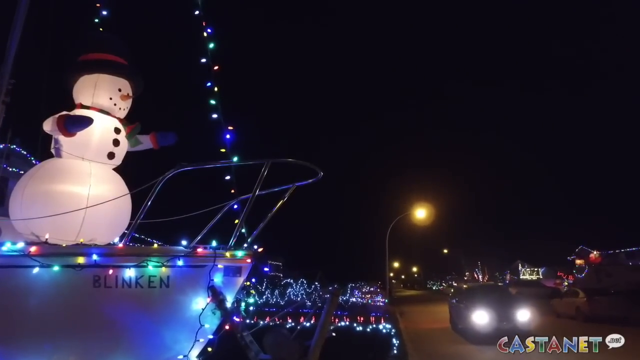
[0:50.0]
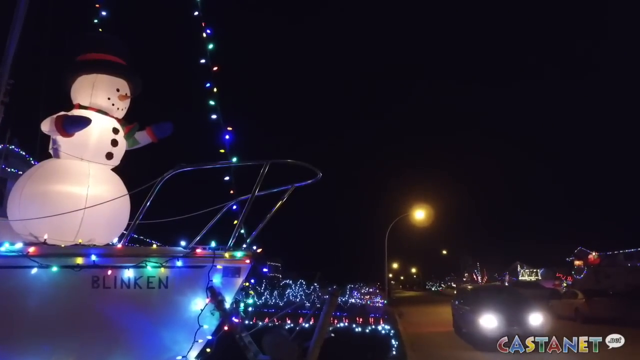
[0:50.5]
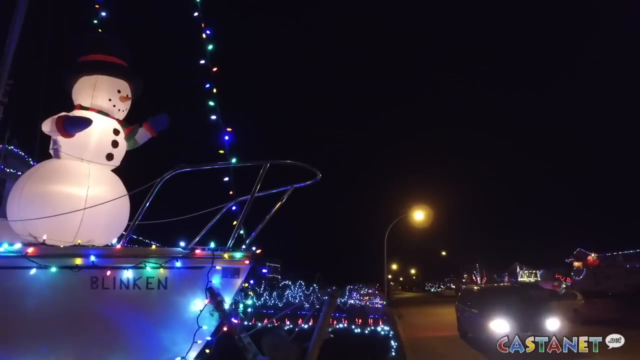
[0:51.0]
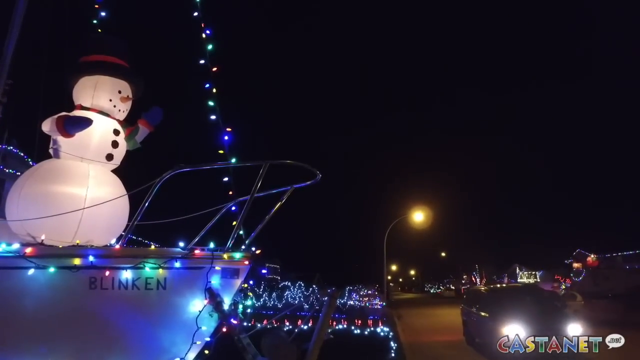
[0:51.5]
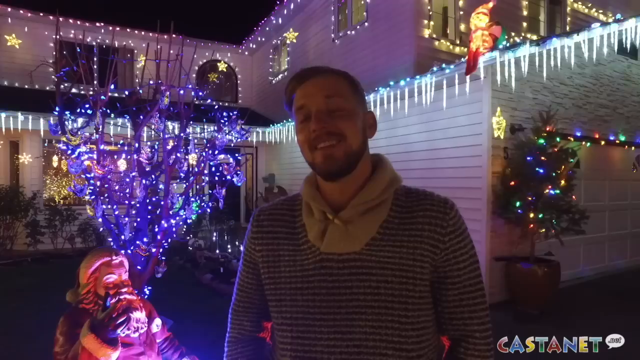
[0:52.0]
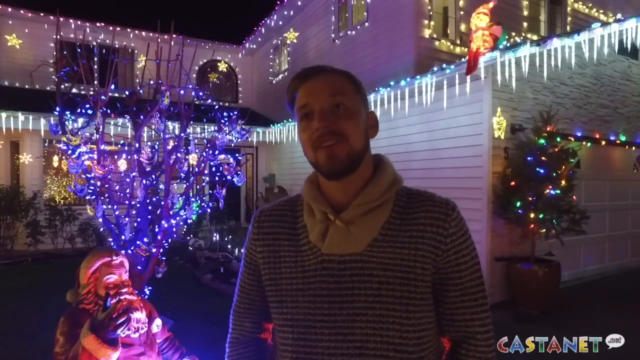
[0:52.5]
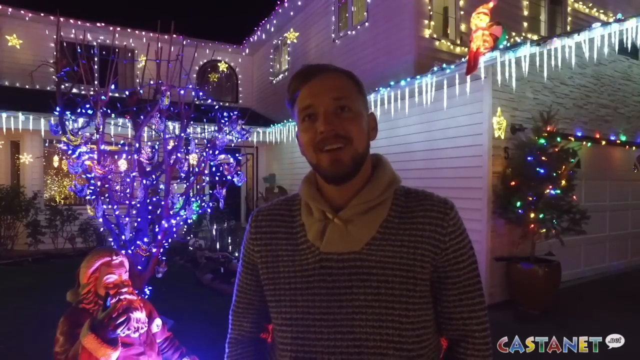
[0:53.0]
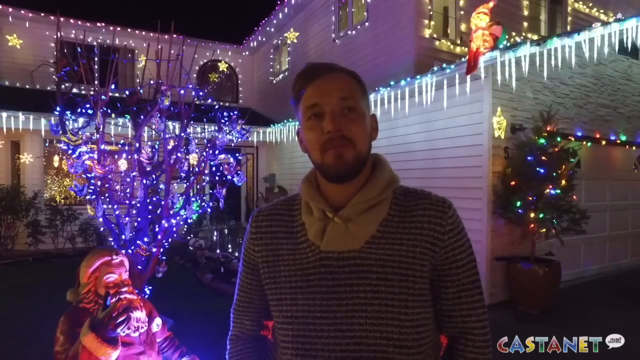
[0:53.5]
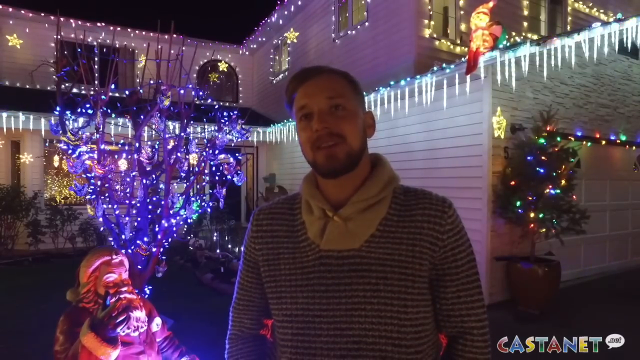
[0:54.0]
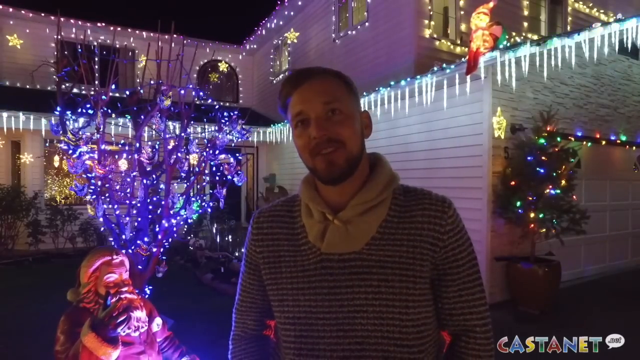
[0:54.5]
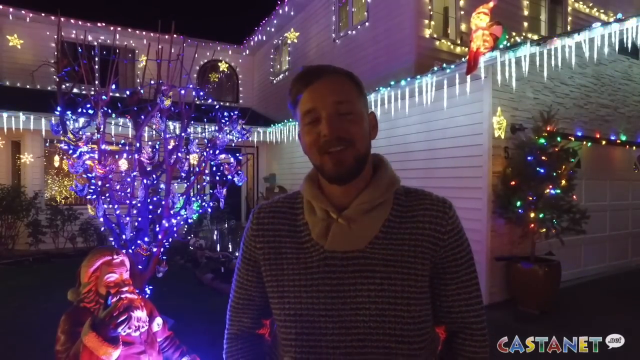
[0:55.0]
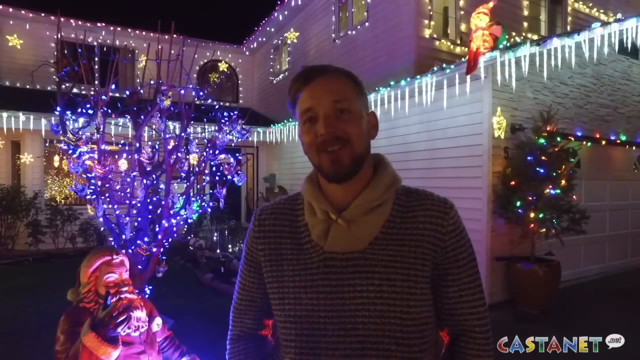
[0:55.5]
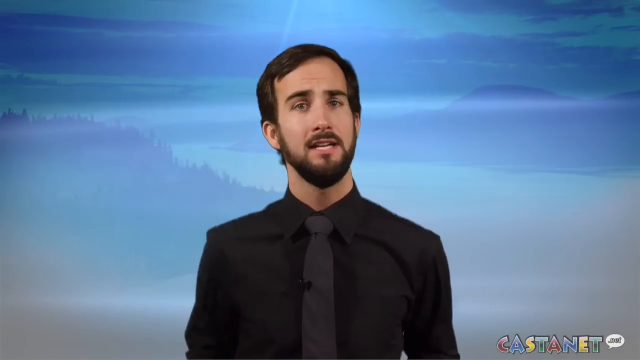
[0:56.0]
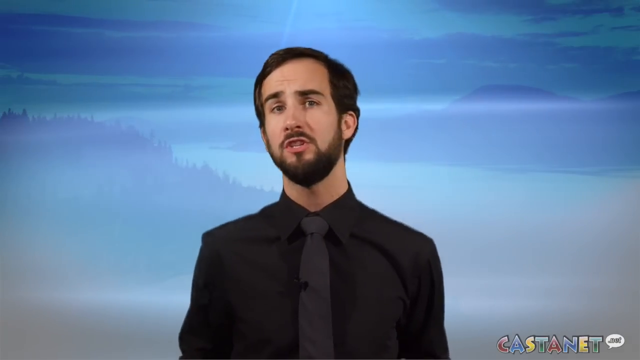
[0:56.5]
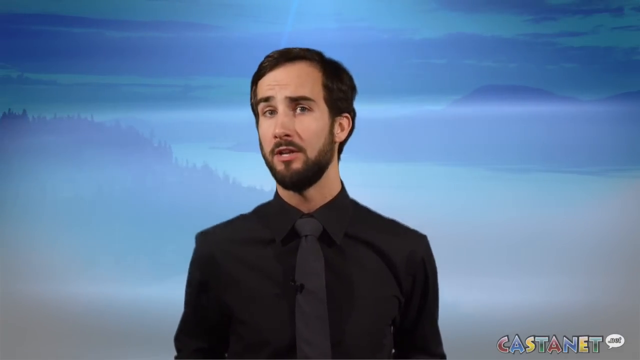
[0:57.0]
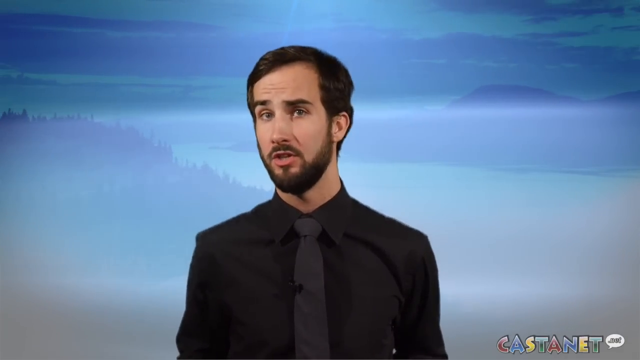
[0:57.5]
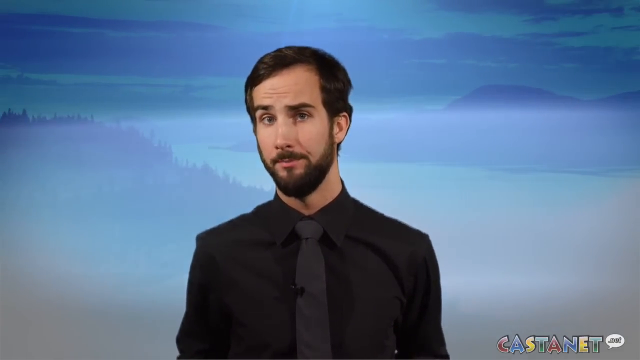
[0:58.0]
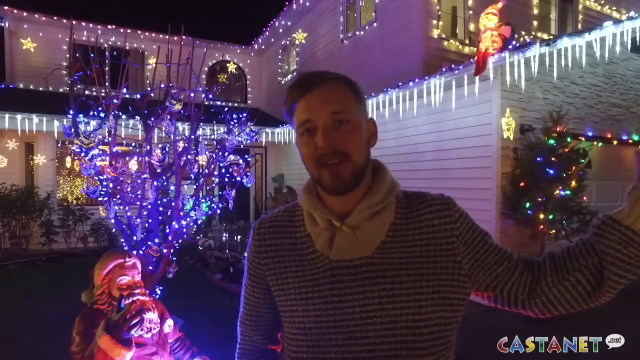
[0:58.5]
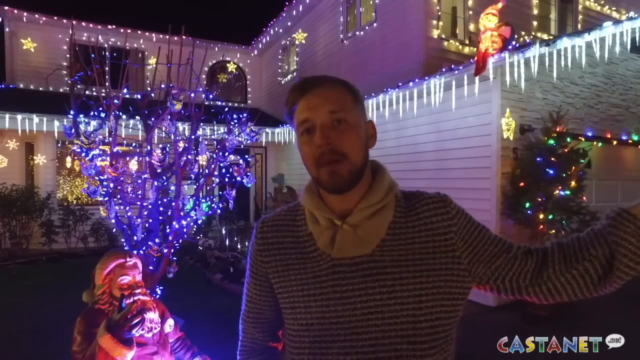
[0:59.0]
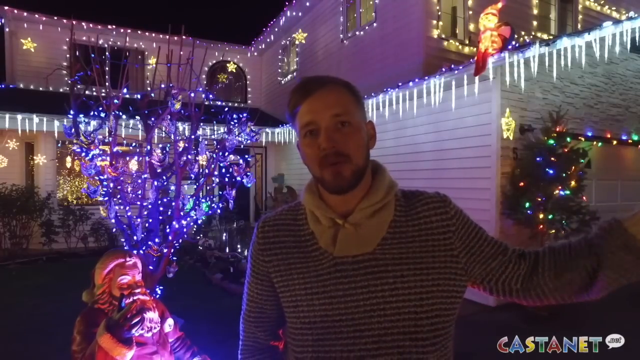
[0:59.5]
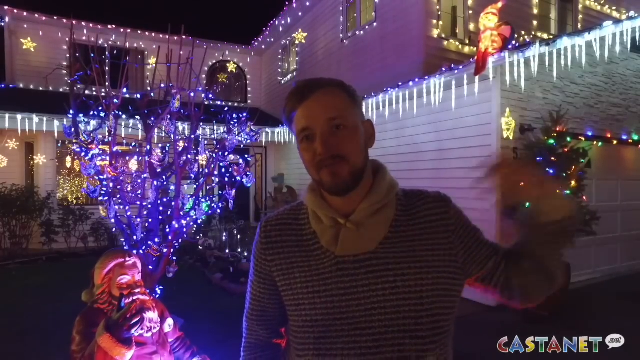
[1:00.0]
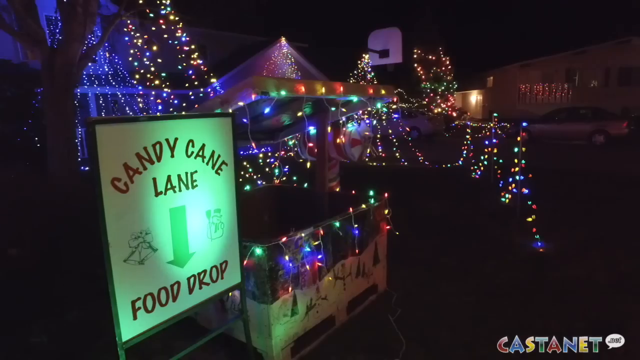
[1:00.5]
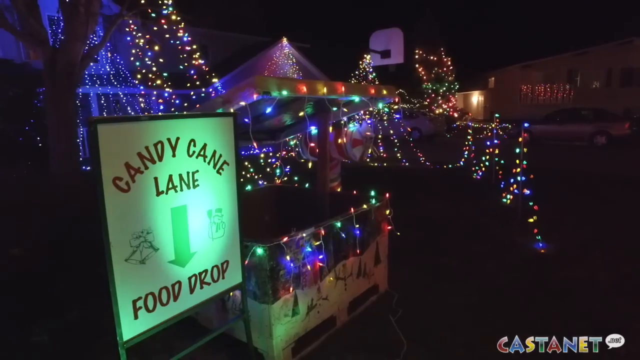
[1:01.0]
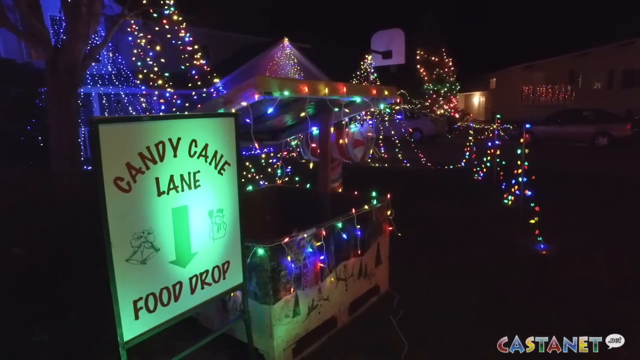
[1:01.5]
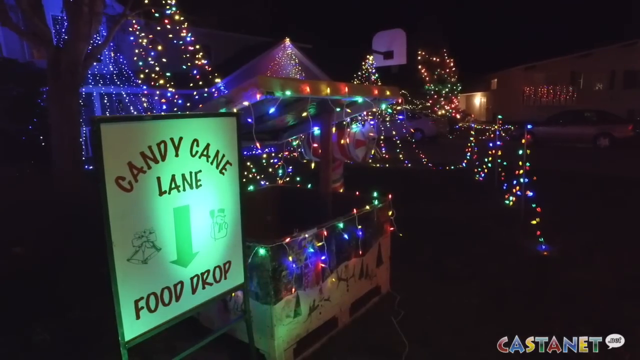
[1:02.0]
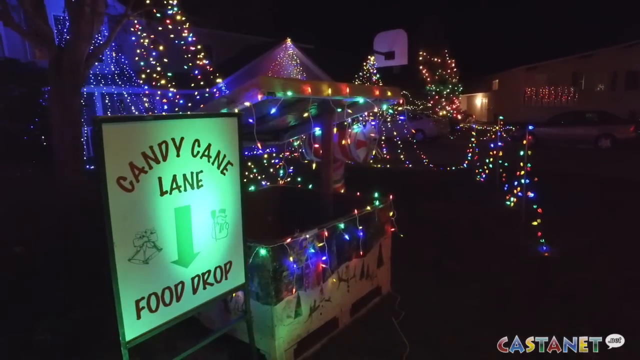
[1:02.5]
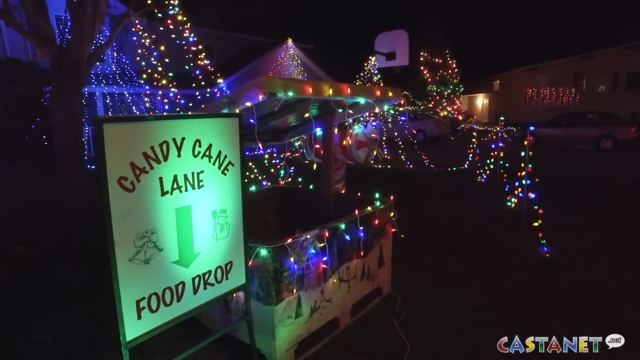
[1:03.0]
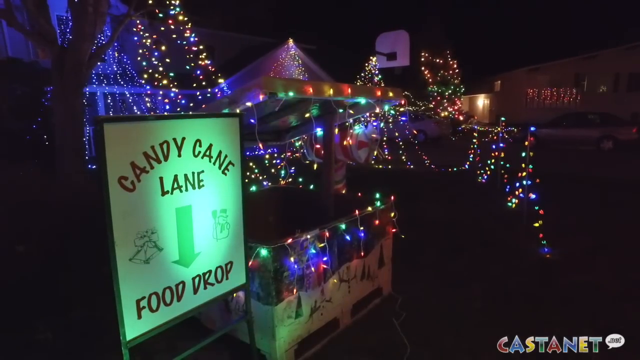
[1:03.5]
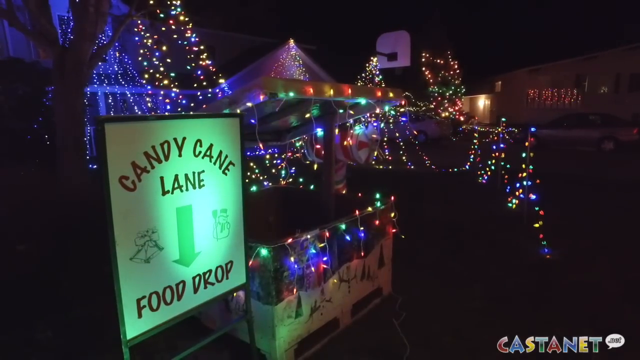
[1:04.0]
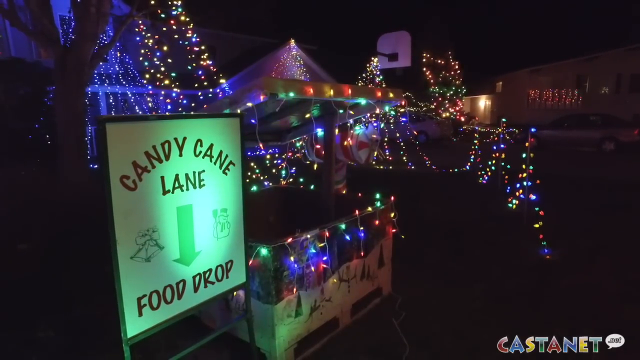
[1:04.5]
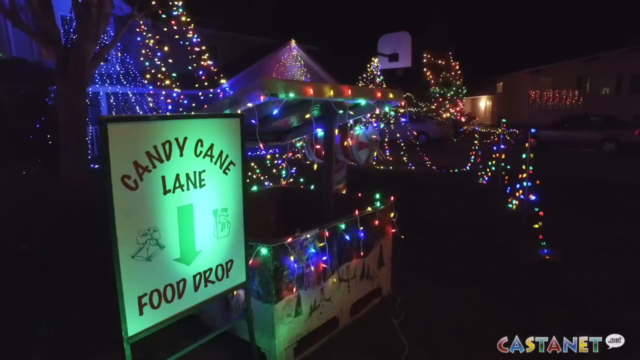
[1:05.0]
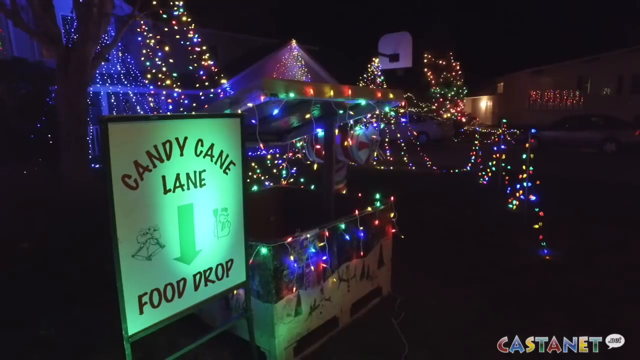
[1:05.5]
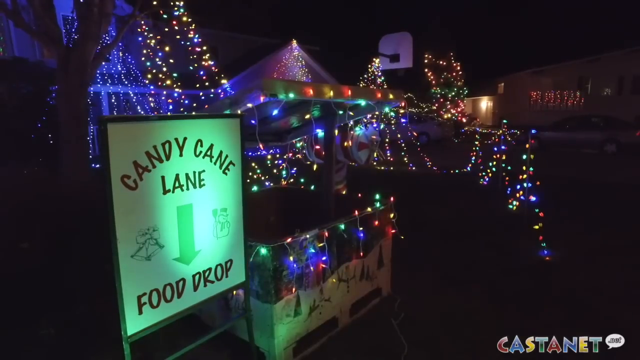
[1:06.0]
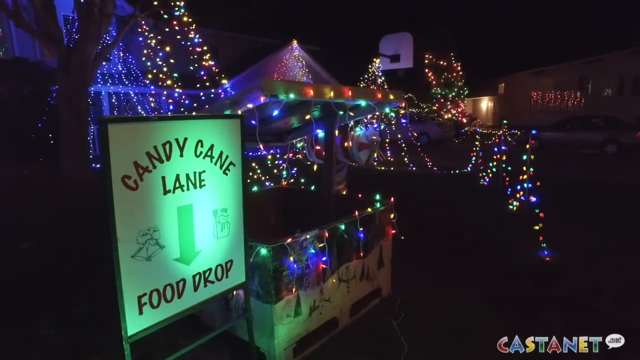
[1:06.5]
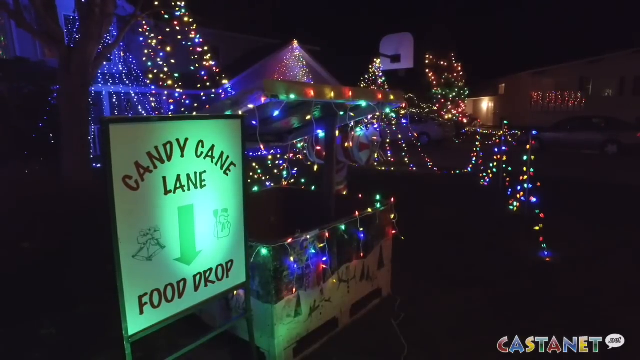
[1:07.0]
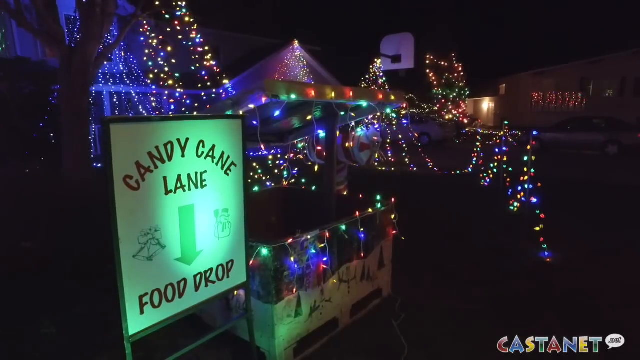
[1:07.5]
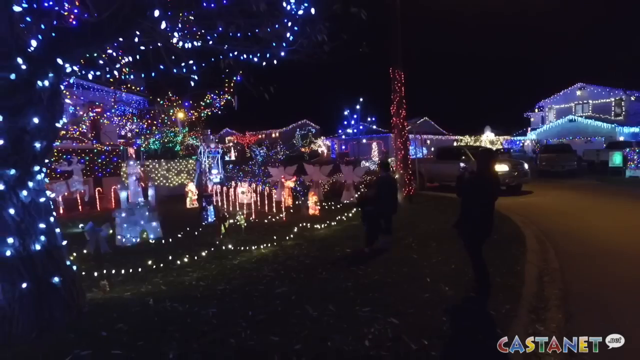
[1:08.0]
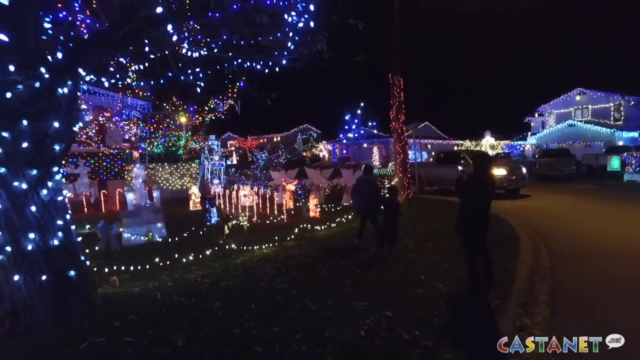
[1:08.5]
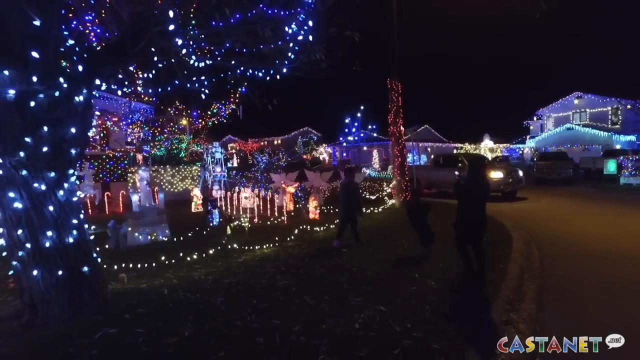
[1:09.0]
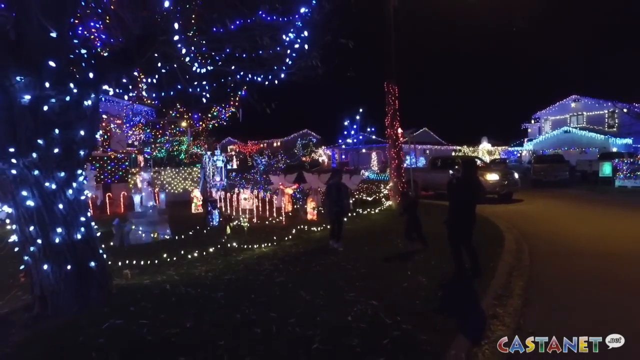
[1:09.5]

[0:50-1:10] Lights are wrapped around the white boat, which says "LINCOLN" in darker letters. The blow-up snowman is by the rail of the boat, and farther down a street light shines really bright. The camera moves very slowly, then pops to a different view of the man talking, then back to the news anchor in a black shirt and black tie, then right back to the man. The camera then goes to "Candy Cane Lane food drop", which has a bunch of lights and an arrow pointing downwards. The anchor only appears for a few seconds and talks really fast, and then the view returns to the man, who waves his hand as he talks. Back at the Candy Cane Lane food drop, lights surround what looks like a little drop-off spot, and there are lights in the background of the food drop as well. A car park is visible in the left corner, with some lights on another building in the back, and some lights dangle downwards towards the sign area in the background. The food drop has a green area, and the middle seems kind of lit by something like a light.